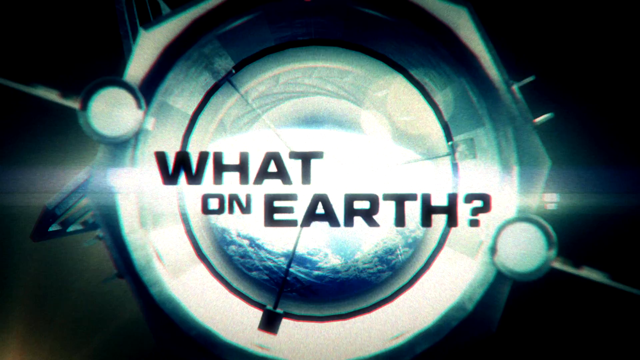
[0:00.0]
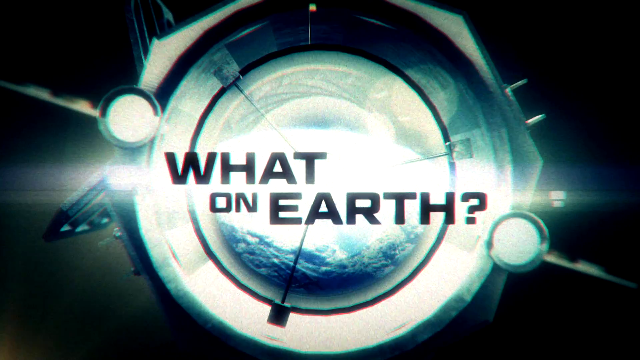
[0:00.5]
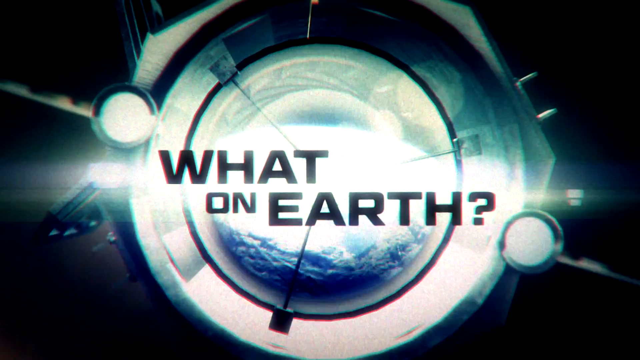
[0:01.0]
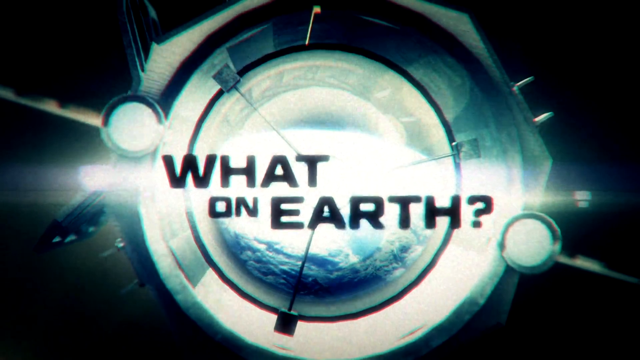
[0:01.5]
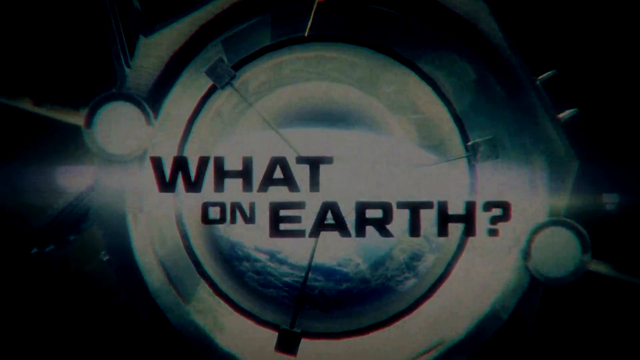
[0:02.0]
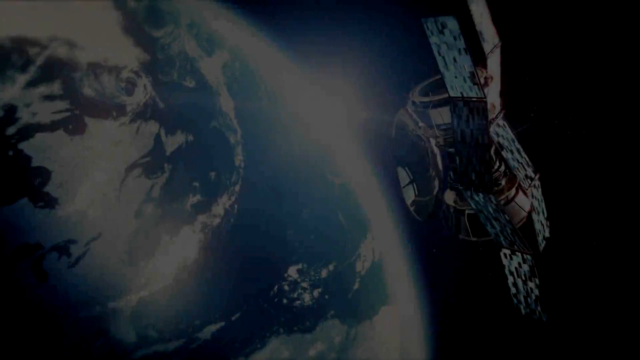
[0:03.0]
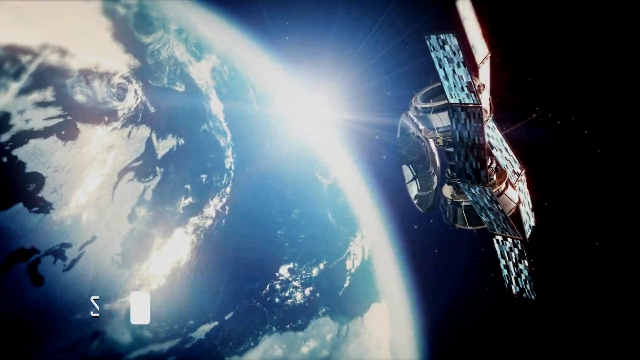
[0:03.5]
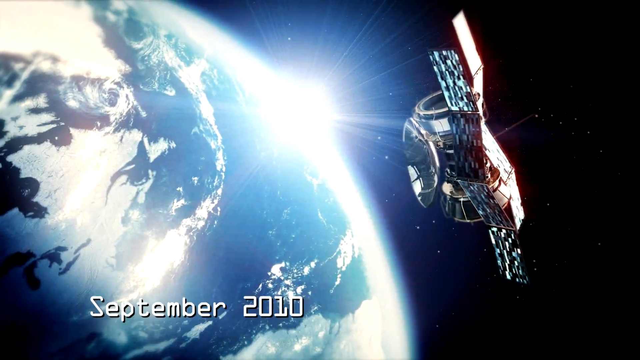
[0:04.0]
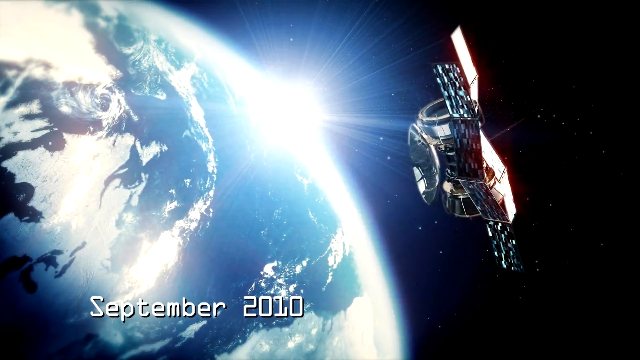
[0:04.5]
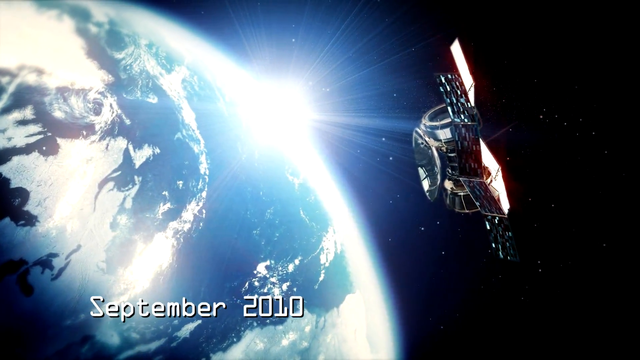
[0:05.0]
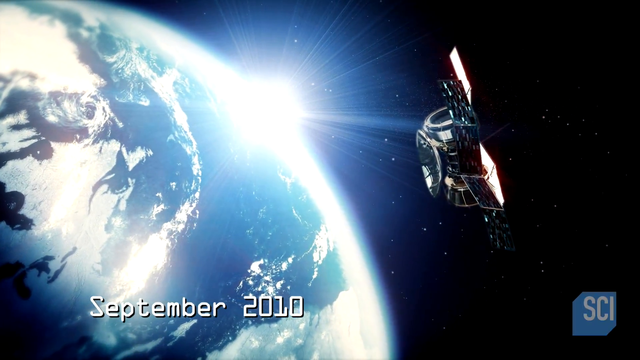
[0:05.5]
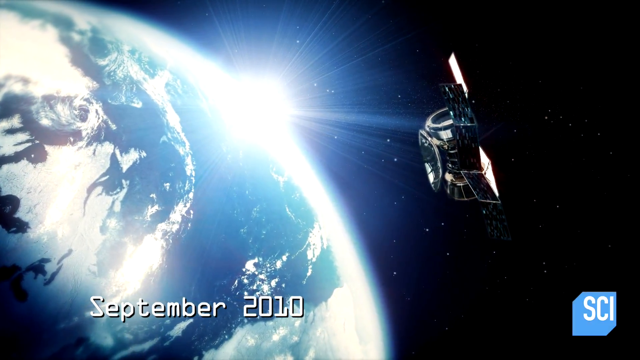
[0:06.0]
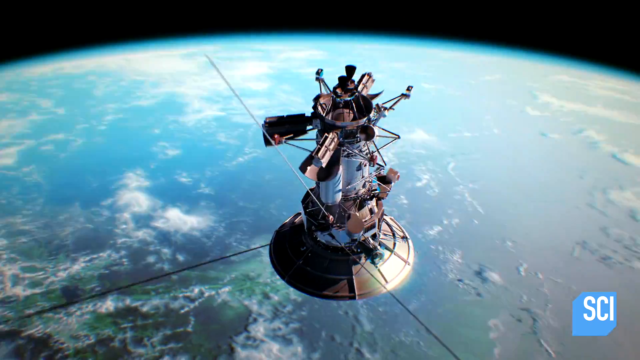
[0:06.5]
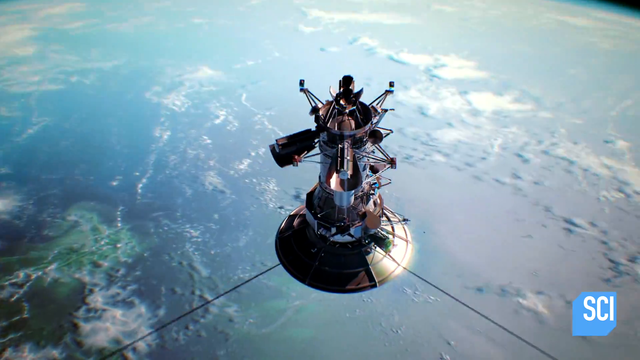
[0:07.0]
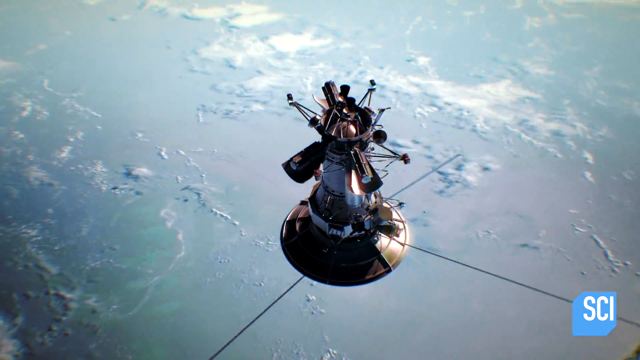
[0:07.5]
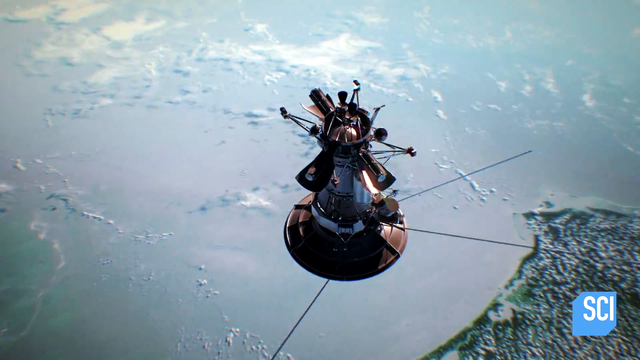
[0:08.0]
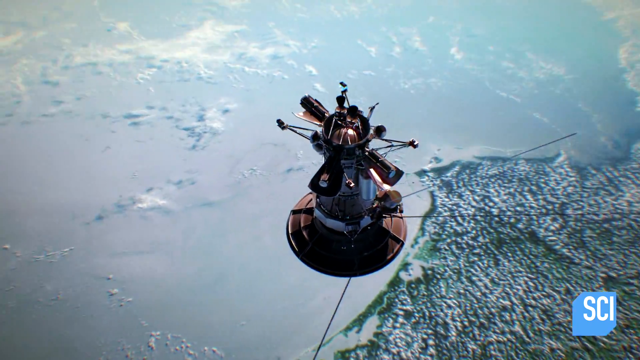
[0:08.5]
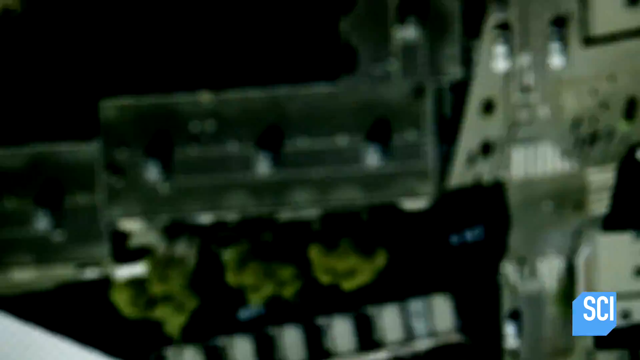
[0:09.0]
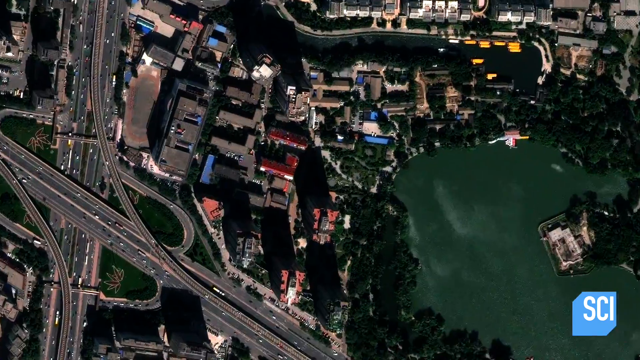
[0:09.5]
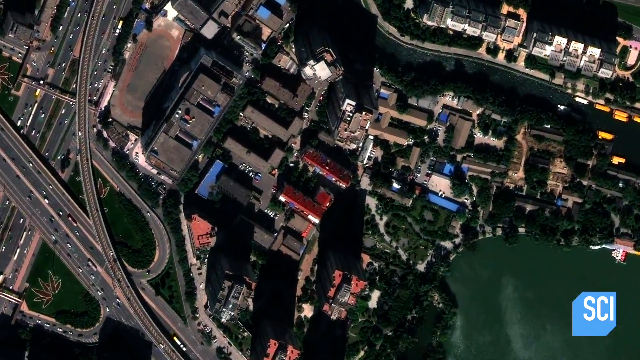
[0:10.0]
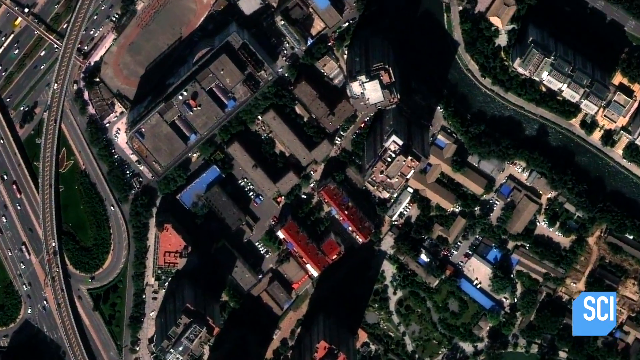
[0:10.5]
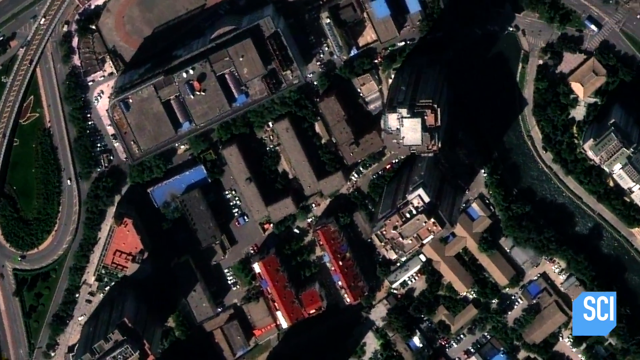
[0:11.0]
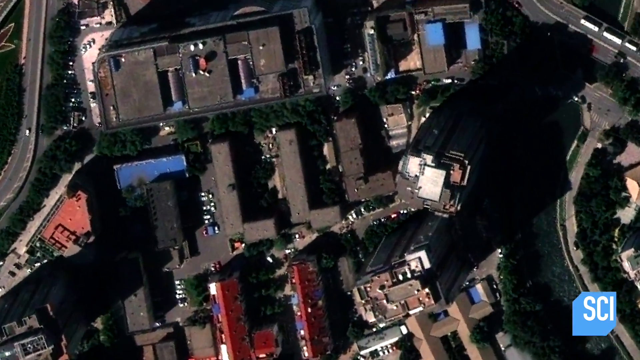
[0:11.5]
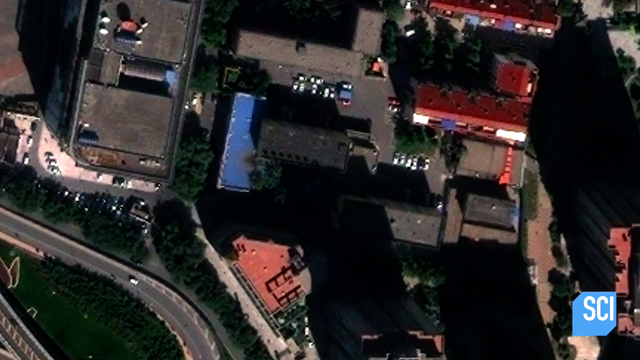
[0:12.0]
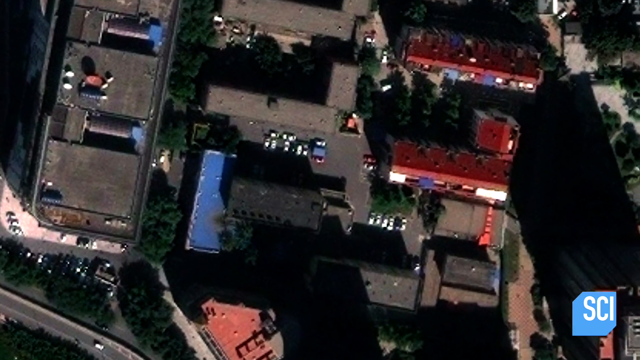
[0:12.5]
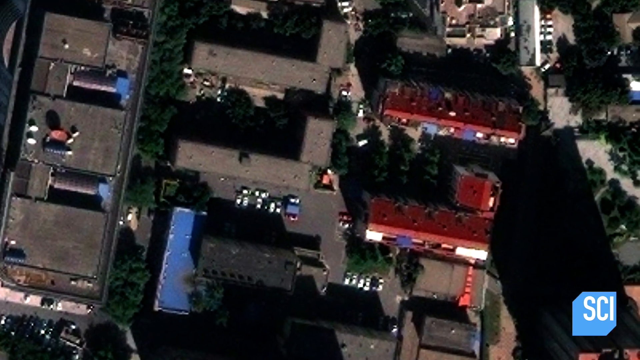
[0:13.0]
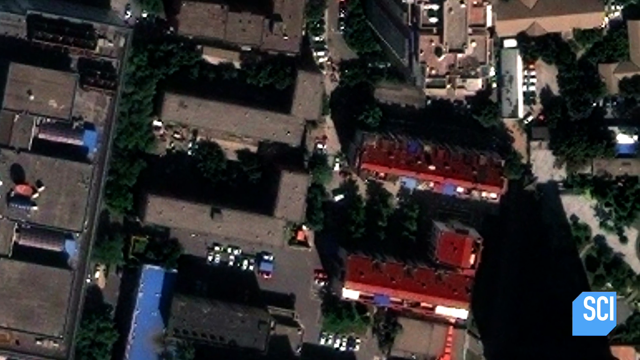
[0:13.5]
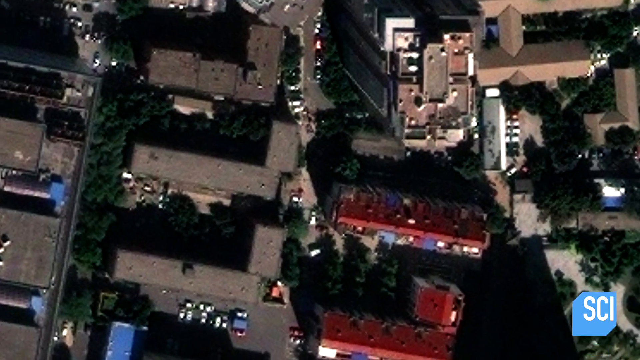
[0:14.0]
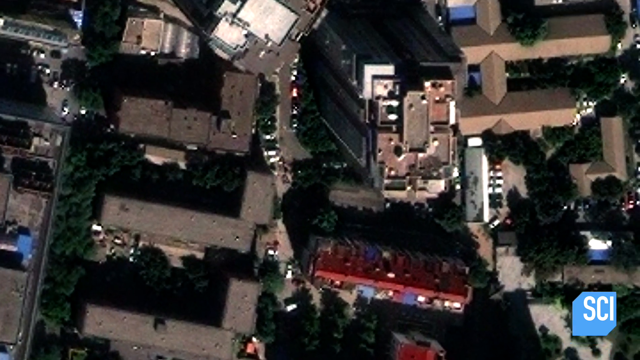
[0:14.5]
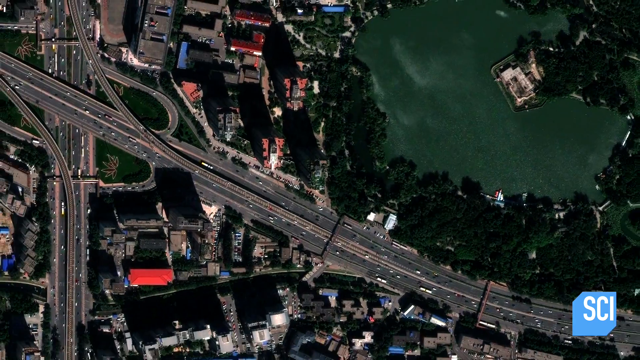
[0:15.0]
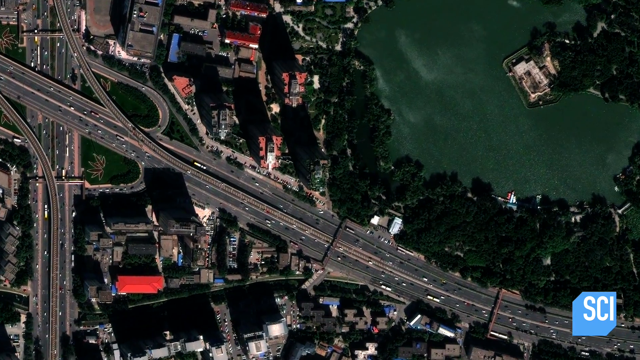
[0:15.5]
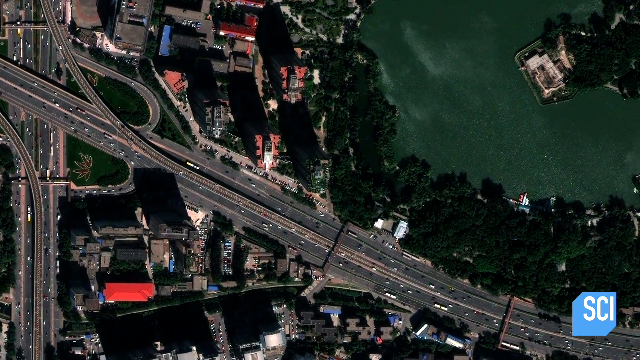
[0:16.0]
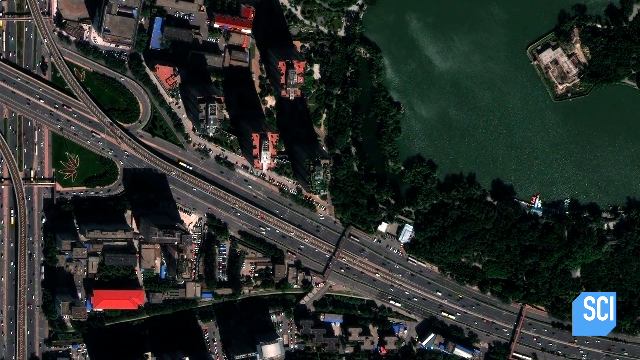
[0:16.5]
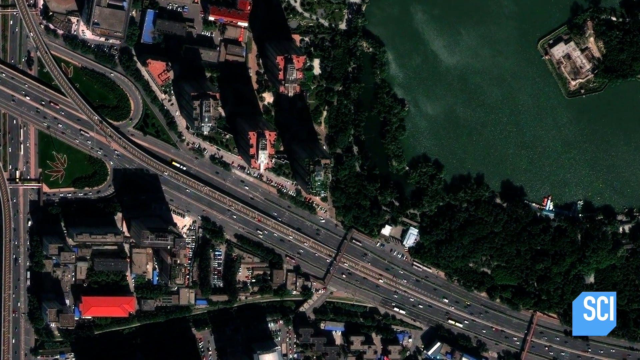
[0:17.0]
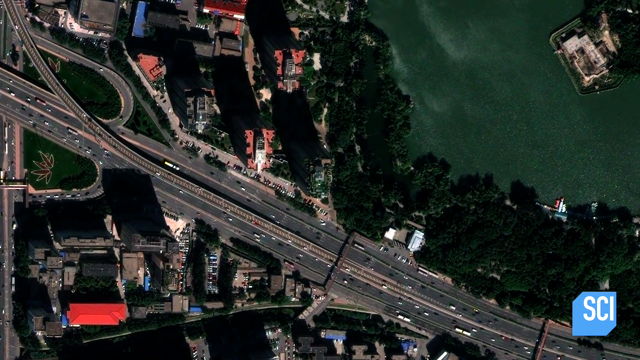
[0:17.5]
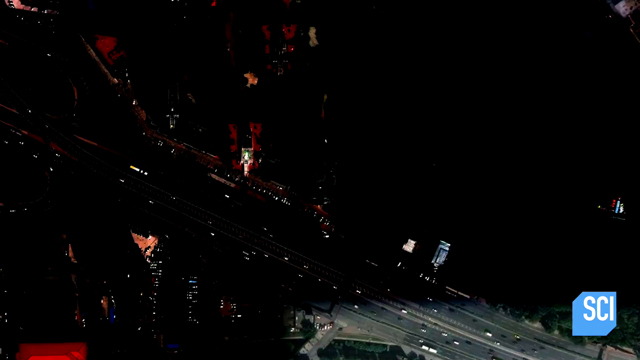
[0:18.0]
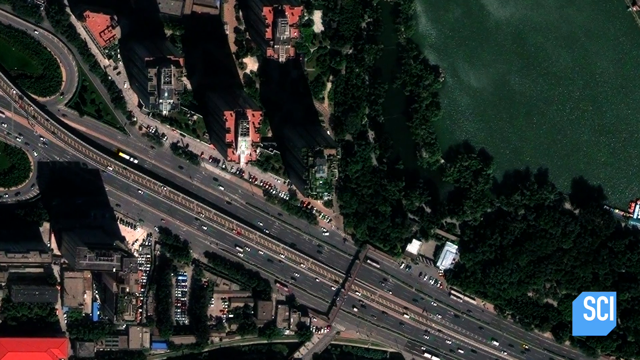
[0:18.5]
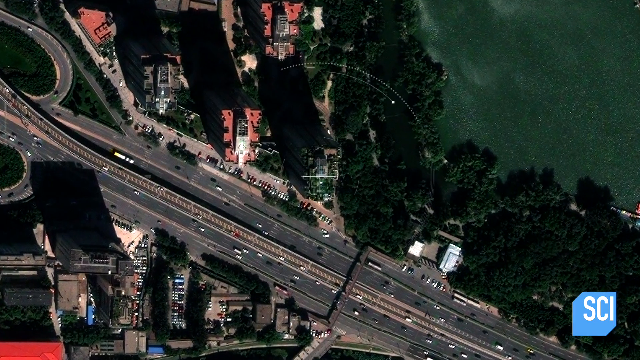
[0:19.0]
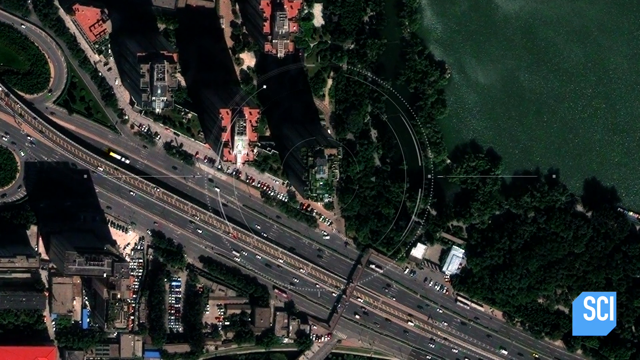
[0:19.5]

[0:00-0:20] A video dated September 2010 shows a satellite circling the globe, with the earth visible below it and its various antennae visible. As it comes closer, the view zooms in on the earth, showing an area of houses surrounded by trees that looks like a neighborhood. There are some roads and a major highway with interchanges, along with what look like apartment buildings, houses and industries, and a lake is visible in the satellite view. At one point a target appears, with circles coming around to point out a location, so the view seems to zoom in on a certain spot. The satellite image is clear.